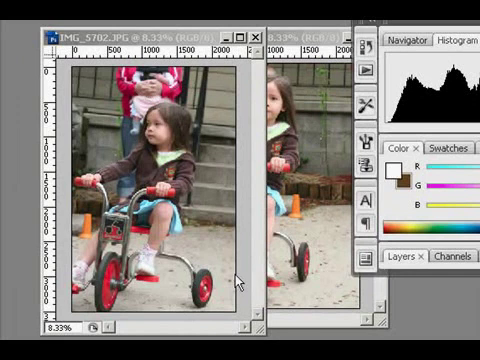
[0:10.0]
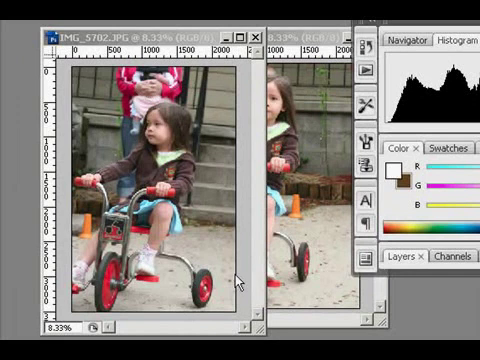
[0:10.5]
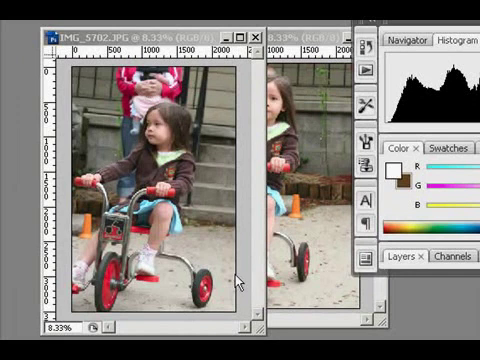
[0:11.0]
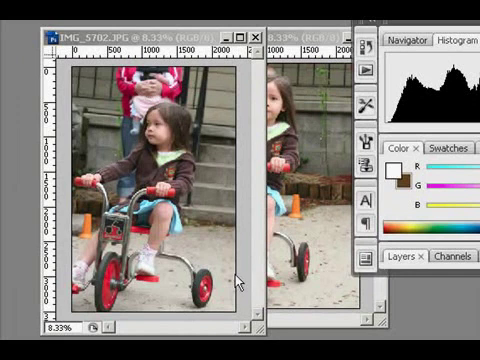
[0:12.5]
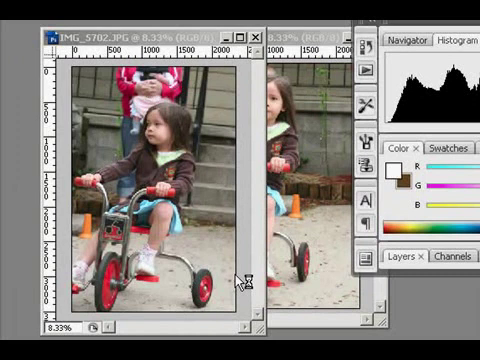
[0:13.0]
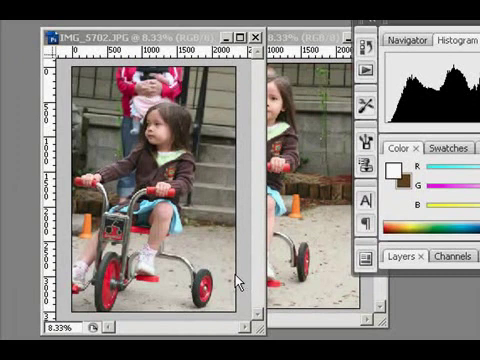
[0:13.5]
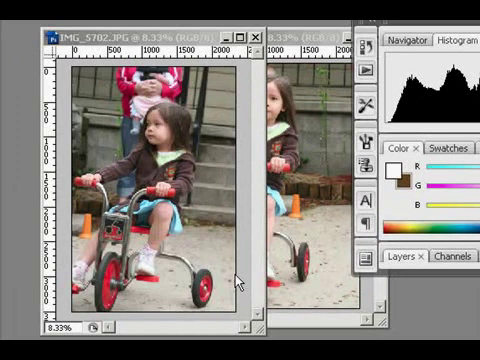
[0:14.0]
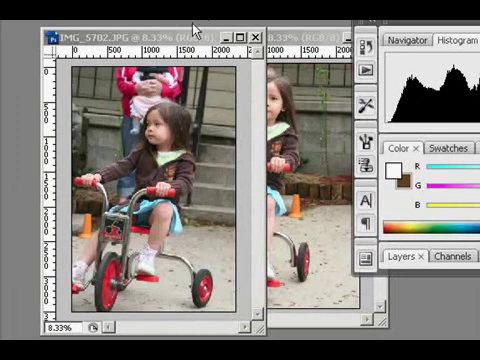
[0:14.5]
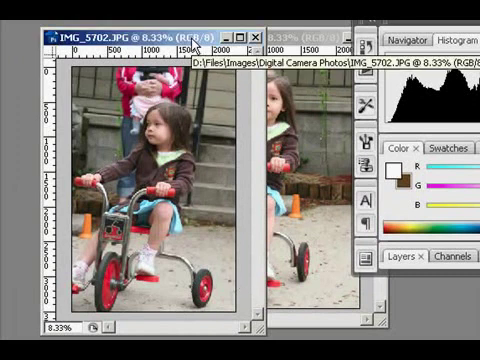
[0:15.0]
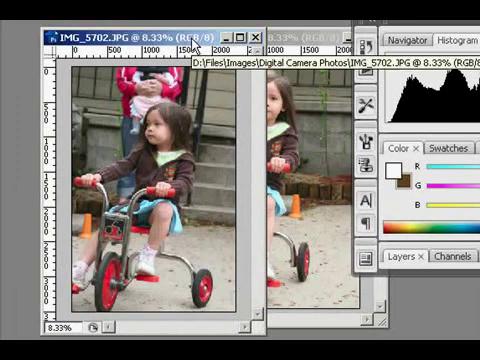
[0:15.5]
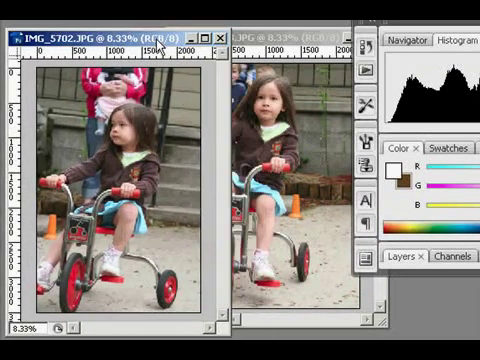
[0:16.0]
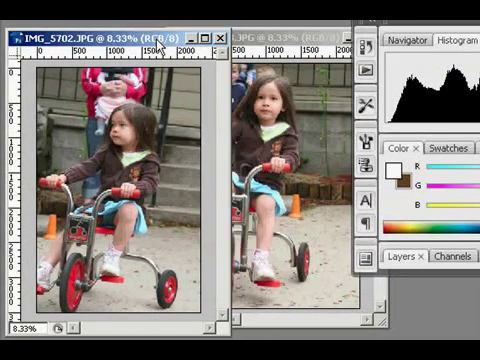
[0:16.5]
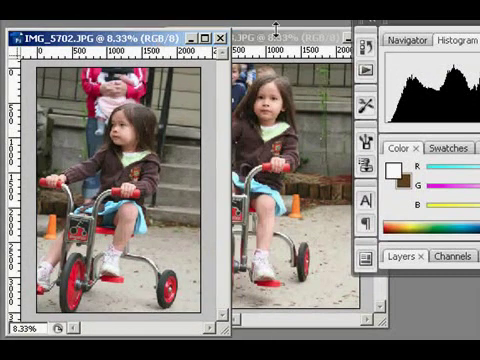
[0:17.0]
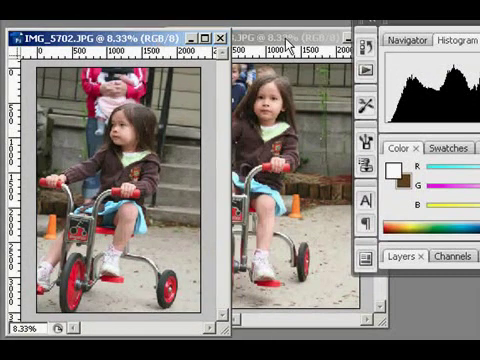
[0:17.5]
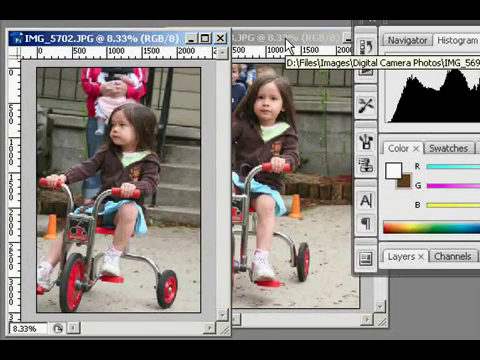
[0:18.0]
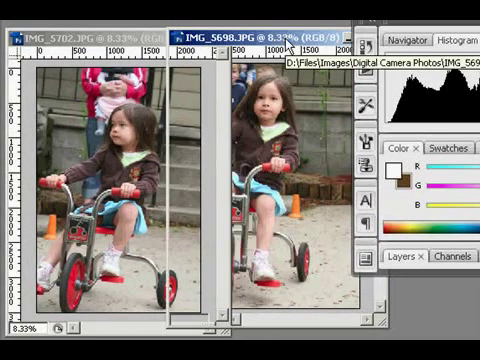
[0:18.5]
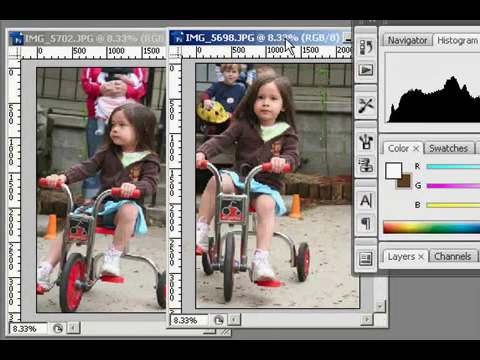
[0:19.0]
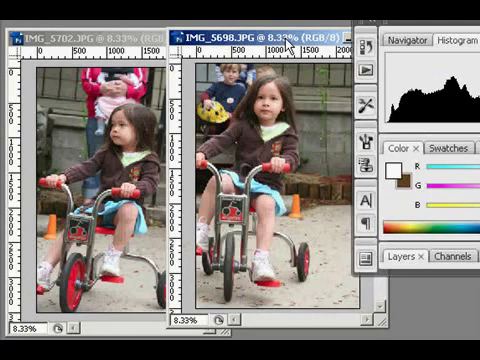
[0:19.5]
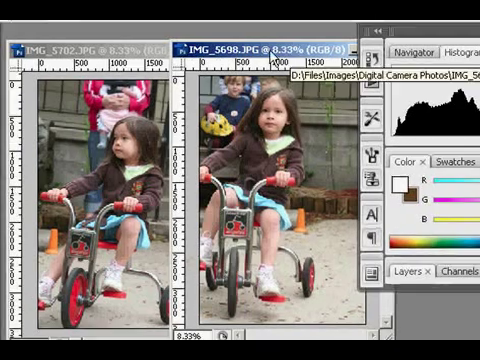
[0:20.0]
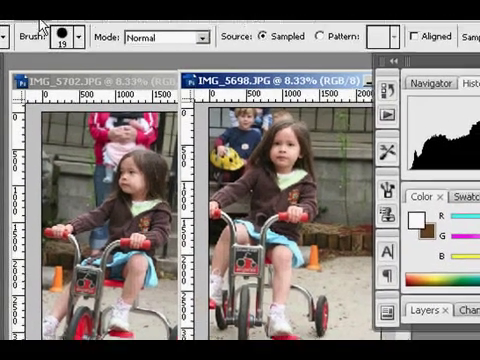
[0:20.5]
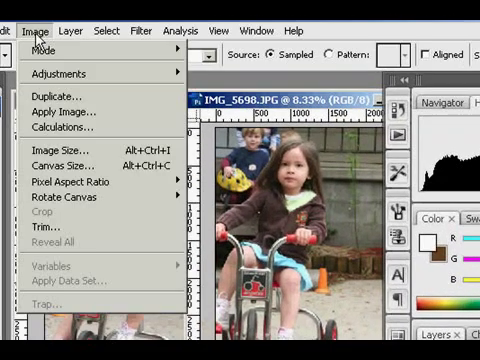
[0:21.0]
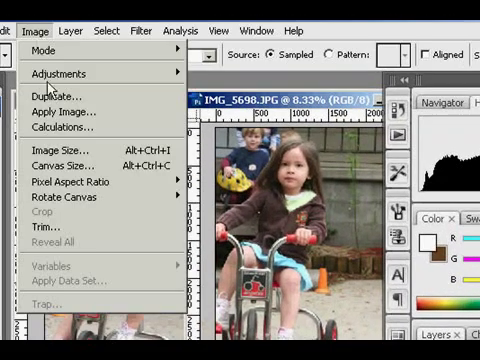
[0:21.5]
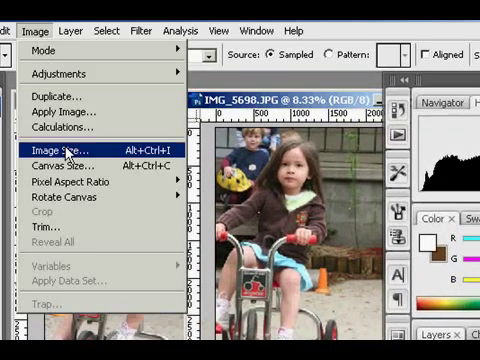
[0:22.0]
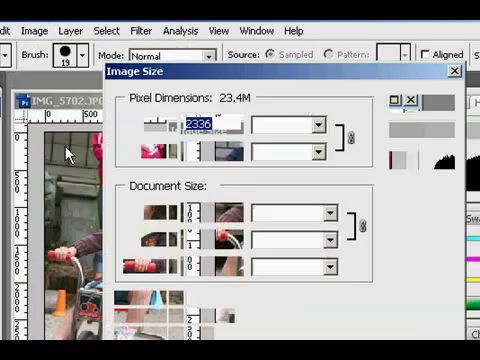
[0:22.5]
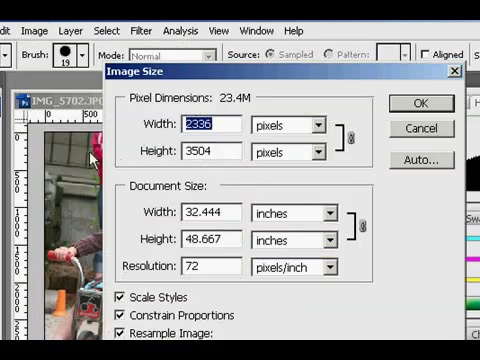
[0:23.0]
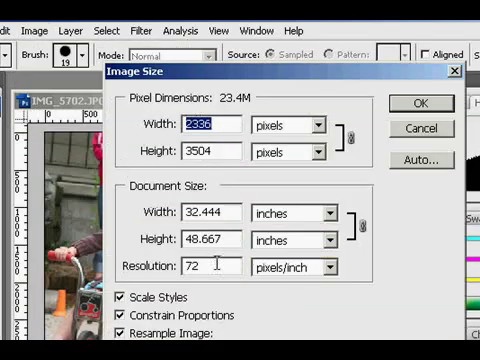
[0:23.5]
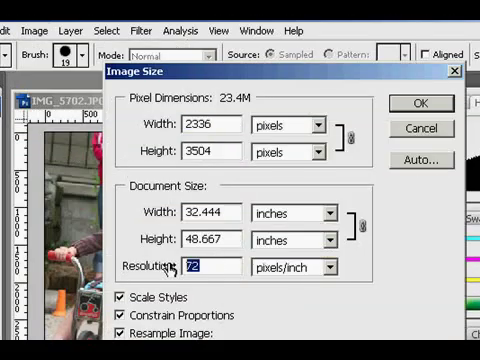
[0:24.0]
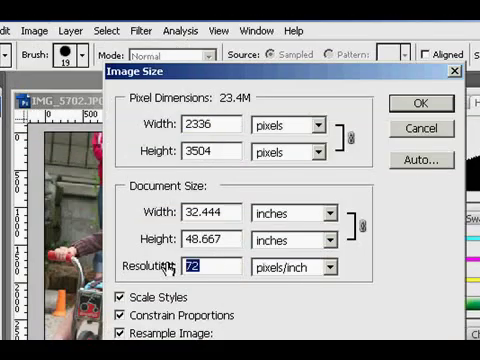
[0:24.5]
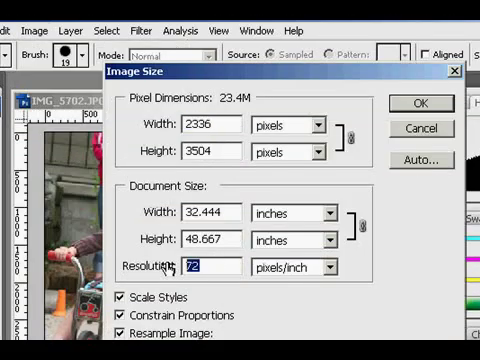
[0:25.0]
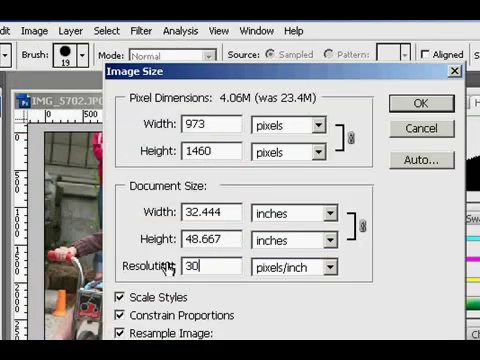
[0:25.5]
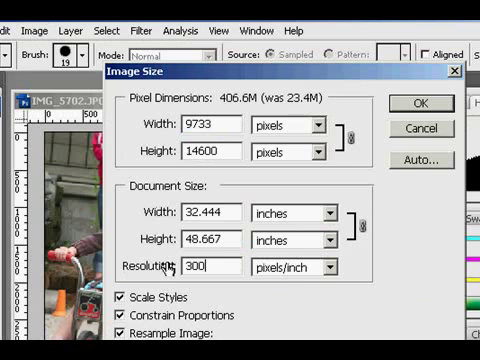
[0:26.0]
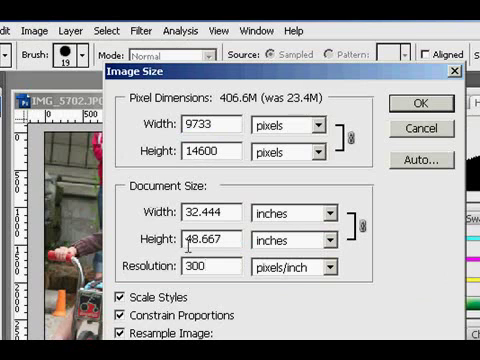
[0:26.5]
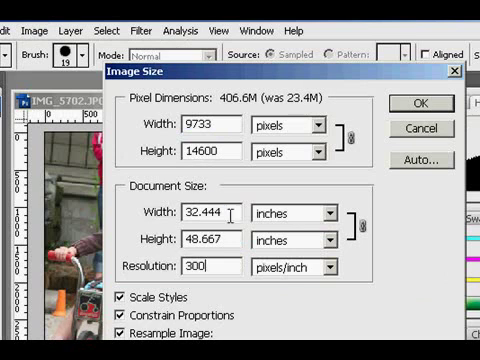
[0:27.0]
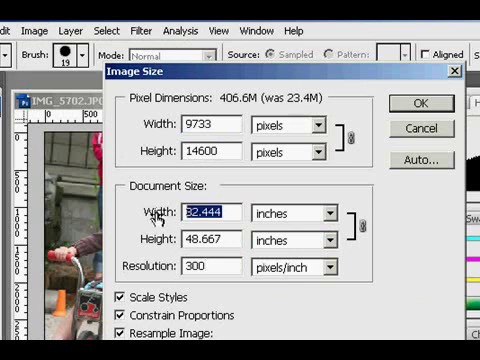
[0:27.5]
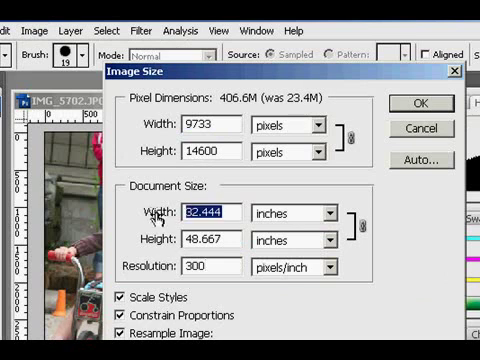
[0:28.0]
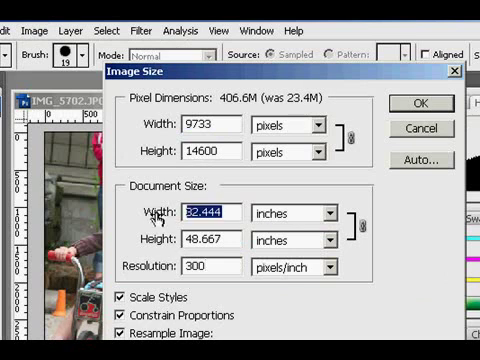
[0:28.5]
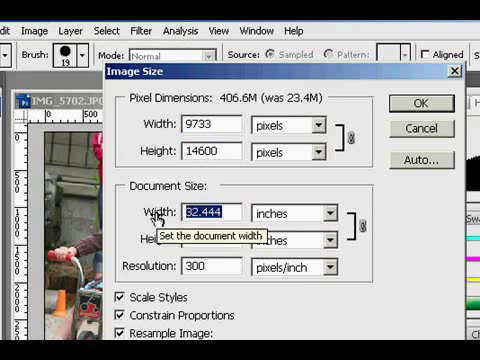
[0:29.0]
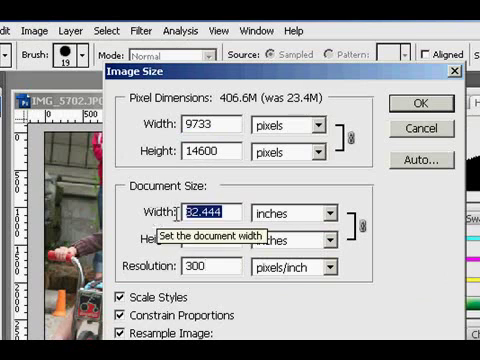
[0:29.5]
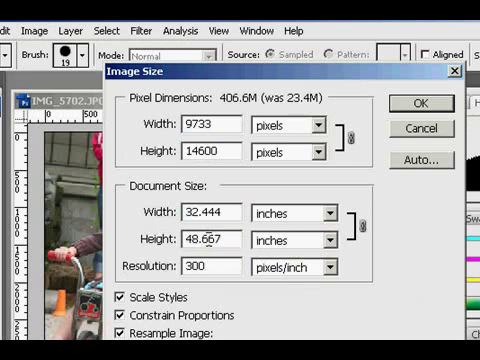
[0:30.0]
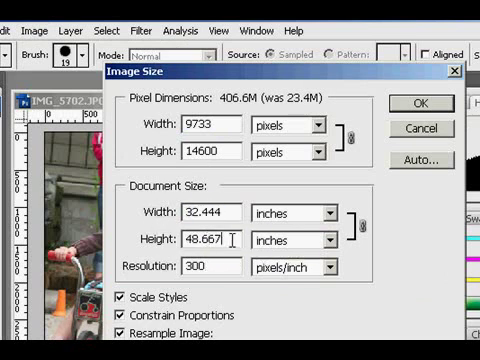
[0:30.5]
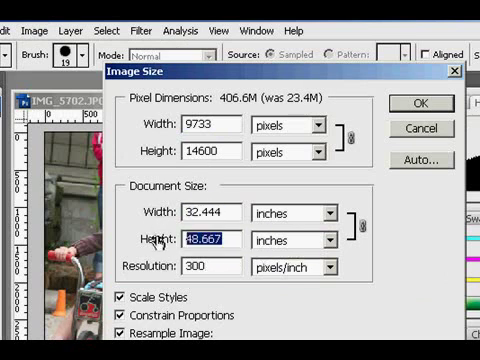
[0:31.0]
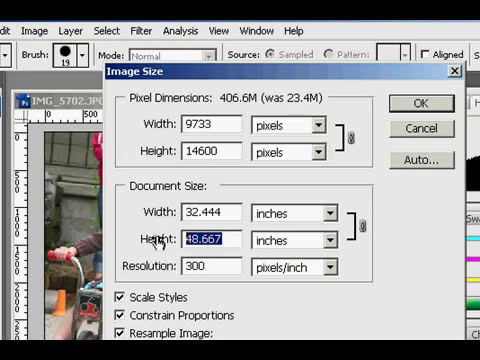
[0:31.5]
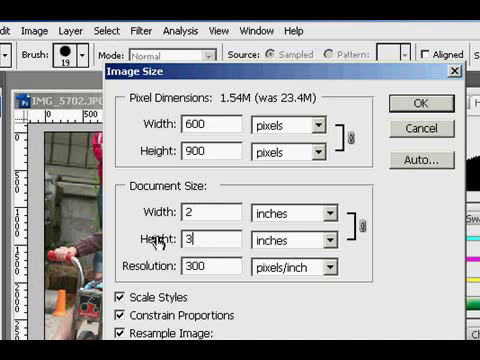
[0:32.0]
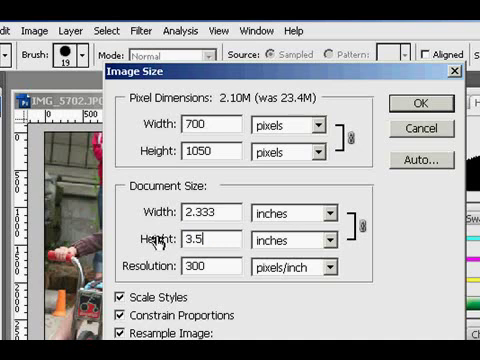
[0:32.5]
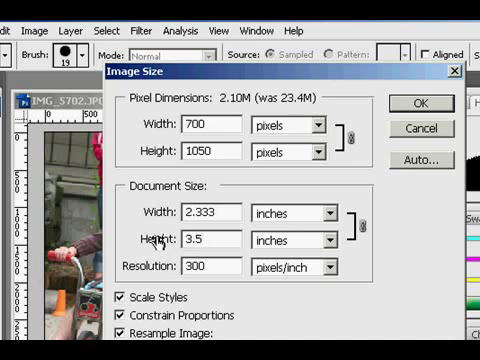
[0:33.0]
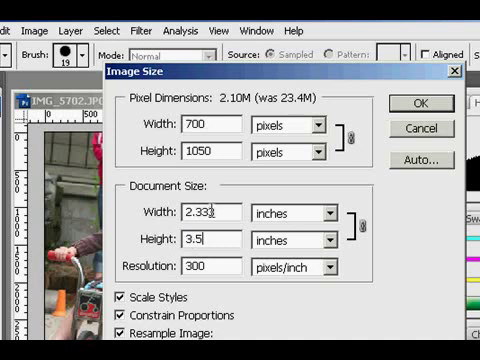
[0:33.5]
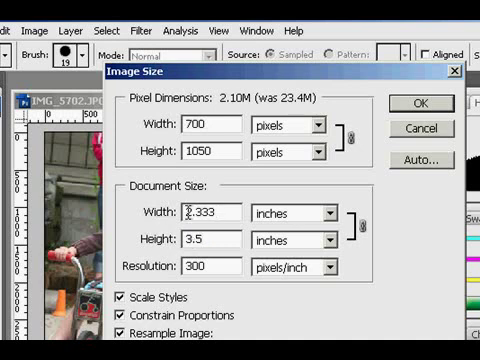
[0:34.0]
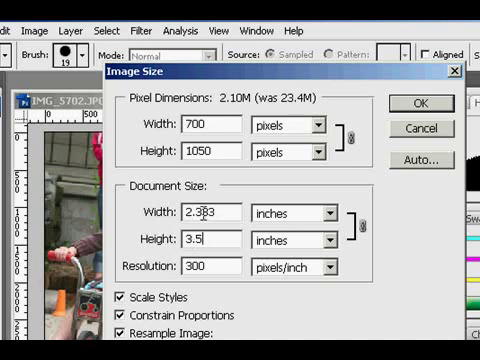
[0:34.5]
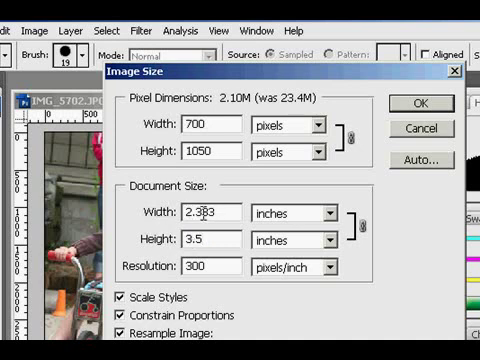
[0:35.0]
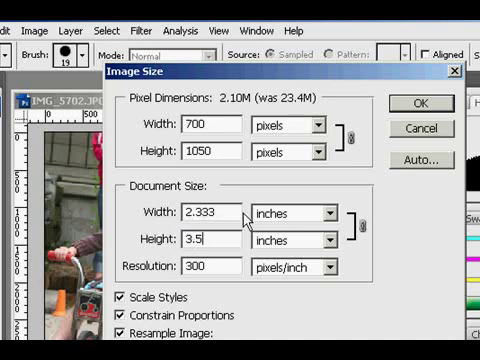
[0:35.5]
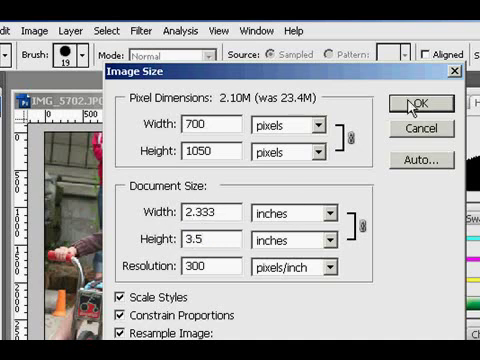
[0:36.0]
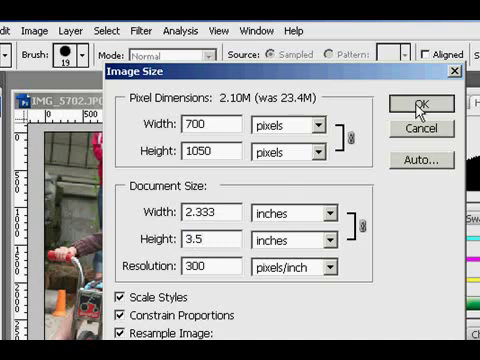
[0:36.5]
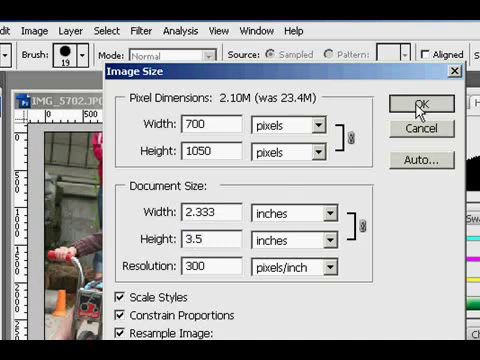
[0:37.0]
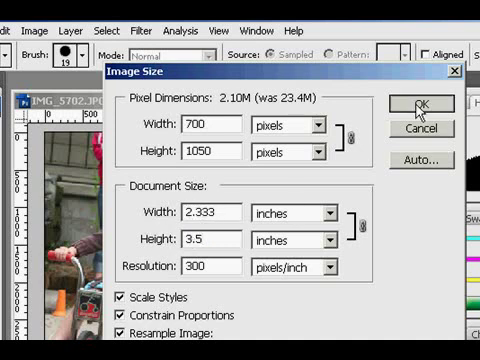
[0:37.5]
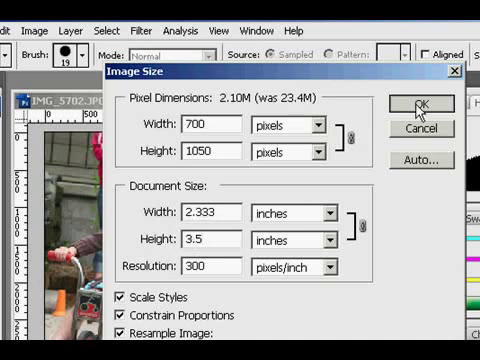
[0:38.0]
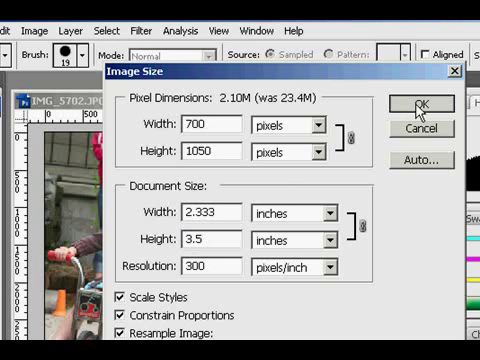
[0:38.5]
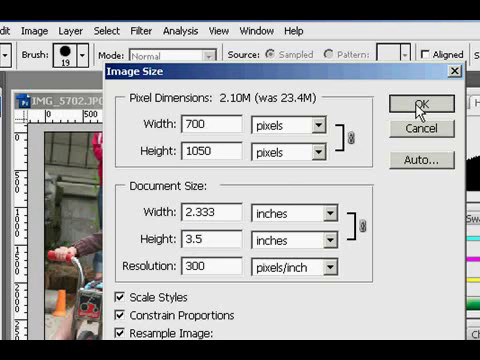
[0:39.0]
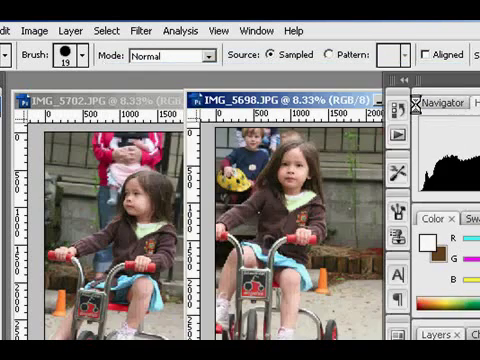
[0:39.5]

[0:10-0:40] Photoshop remains on screen with the two photos of the girl riding the tricycle, and the mouse does little at first. The user then shifts focus to the photo that was behind the first one. This second photo also shows the girl on the tricycle, but she looks directly at the camera rather than off to the right, and instead of the woman carrying the baby standing behind her, there are a couple of boys. Only the top of one boy's head is visible because he is standing behind the girl, while the second boy, to the right of the girl, has fair hair and wears a balloon jumper. The user then moves up to the top toolbar, goes into the image menu, adjusts the resolution, alters the width and height of this image, and clicks OK.